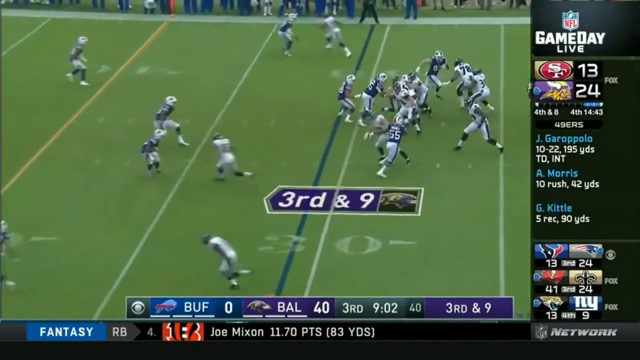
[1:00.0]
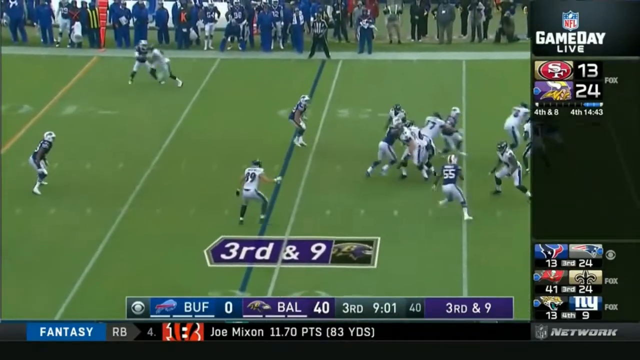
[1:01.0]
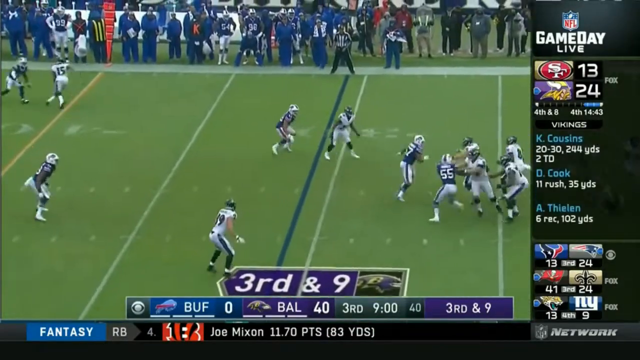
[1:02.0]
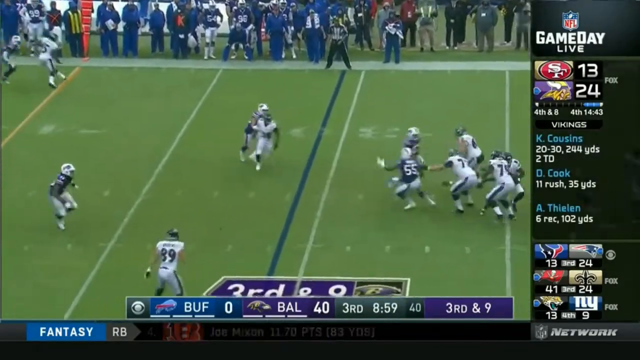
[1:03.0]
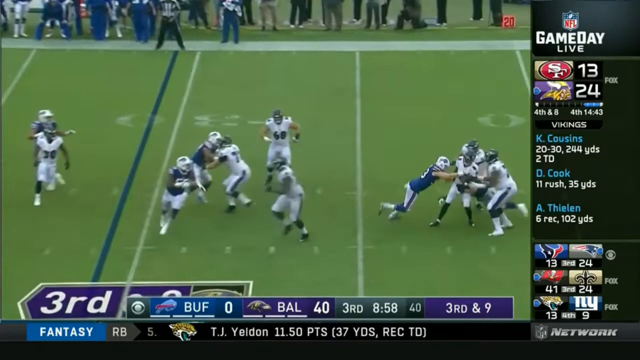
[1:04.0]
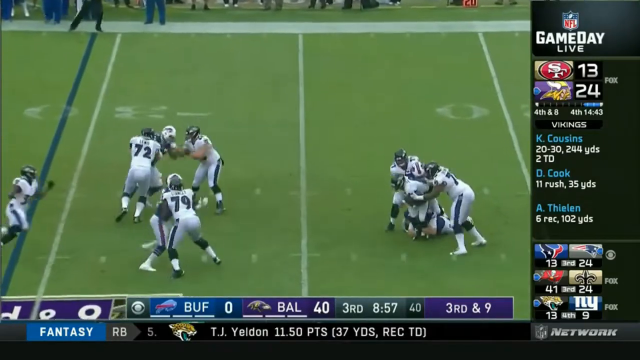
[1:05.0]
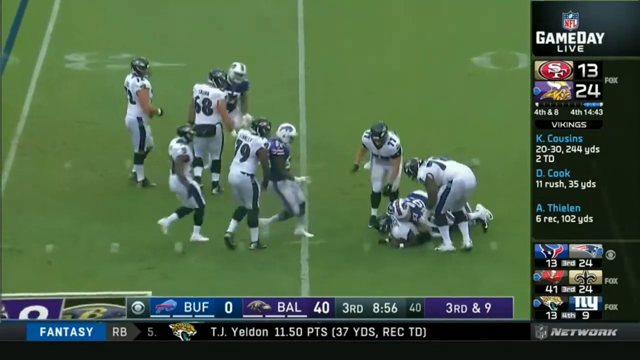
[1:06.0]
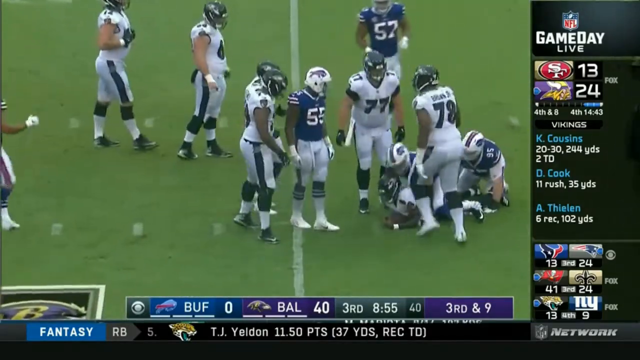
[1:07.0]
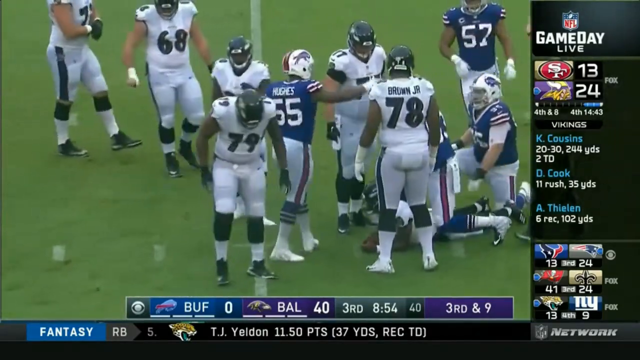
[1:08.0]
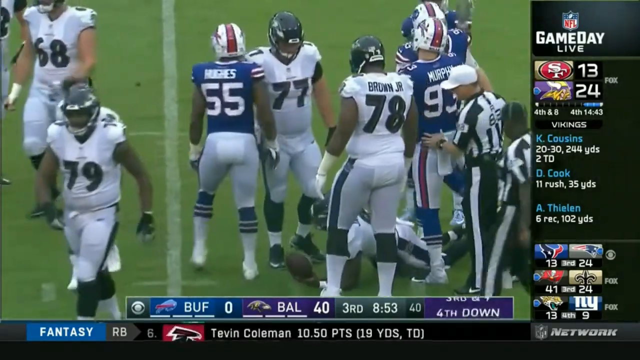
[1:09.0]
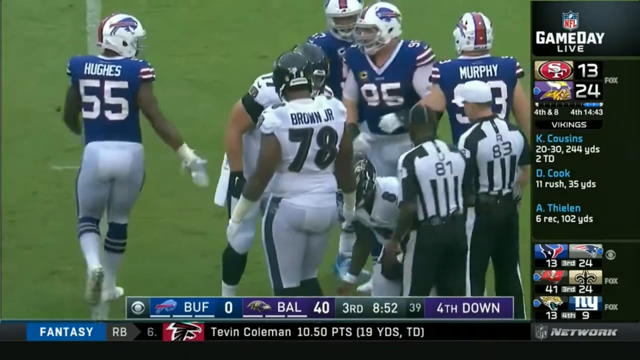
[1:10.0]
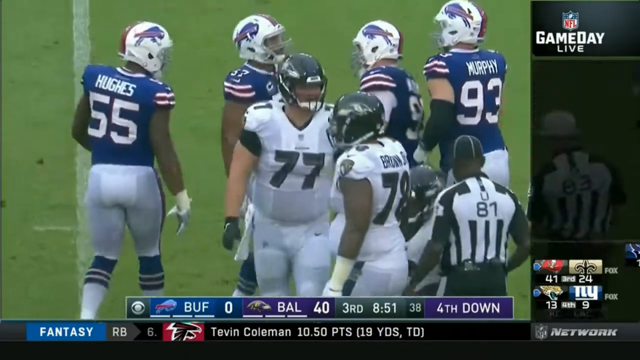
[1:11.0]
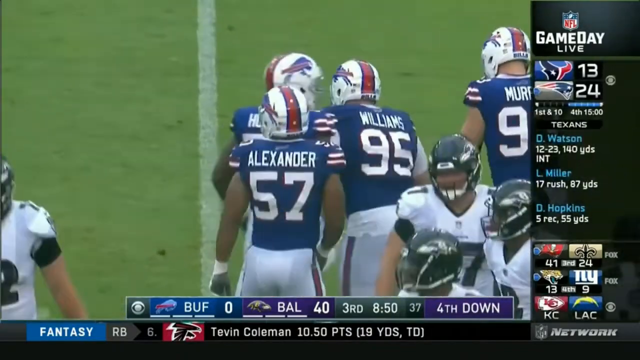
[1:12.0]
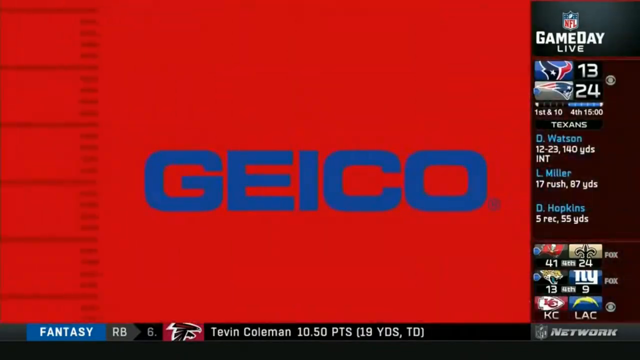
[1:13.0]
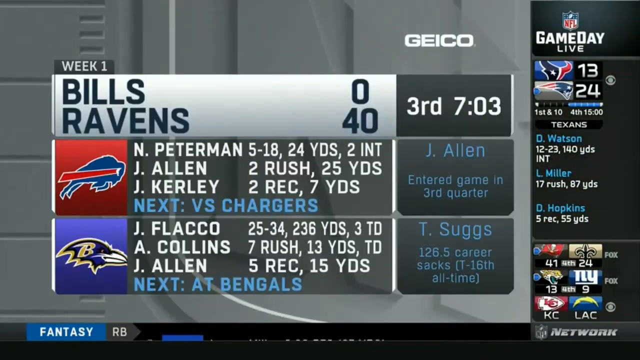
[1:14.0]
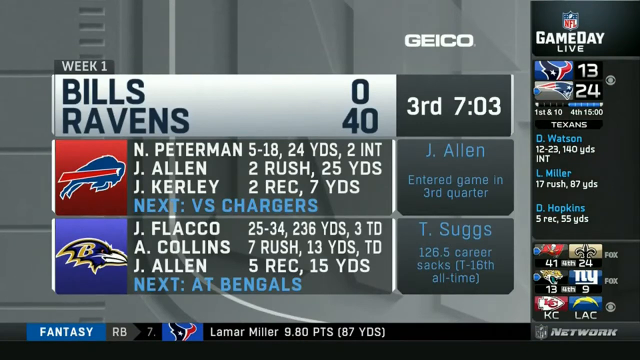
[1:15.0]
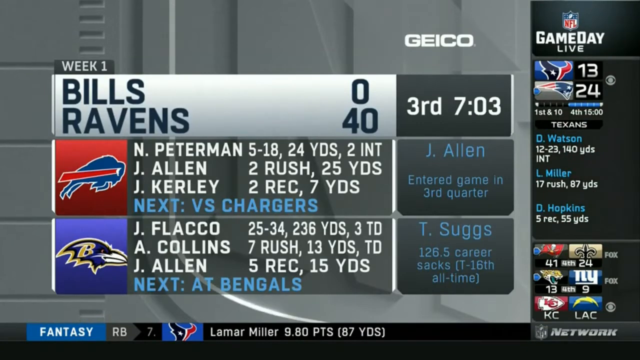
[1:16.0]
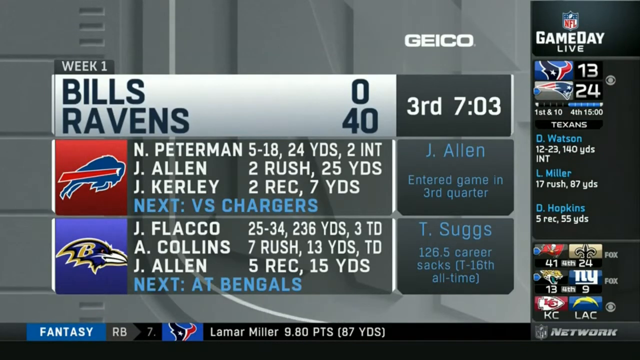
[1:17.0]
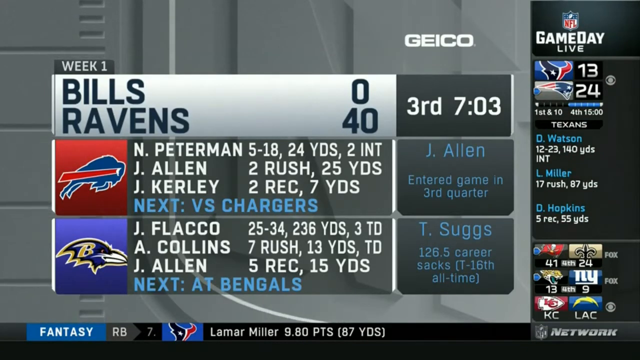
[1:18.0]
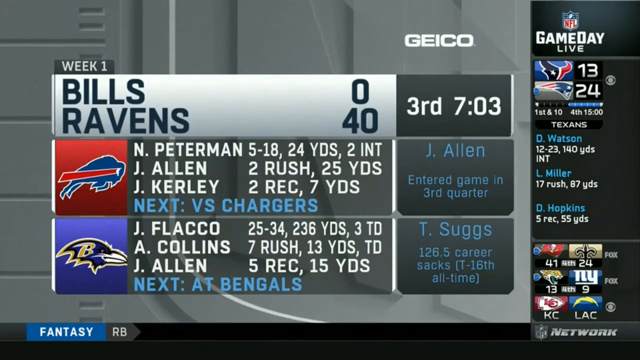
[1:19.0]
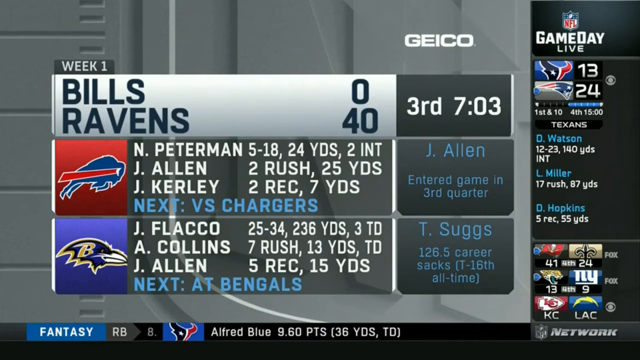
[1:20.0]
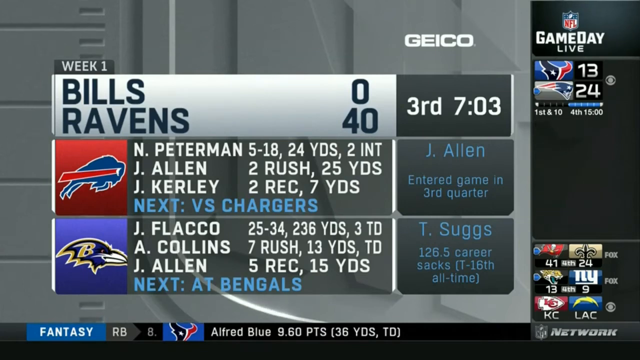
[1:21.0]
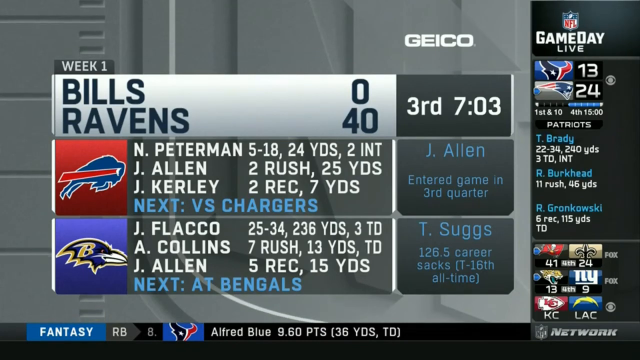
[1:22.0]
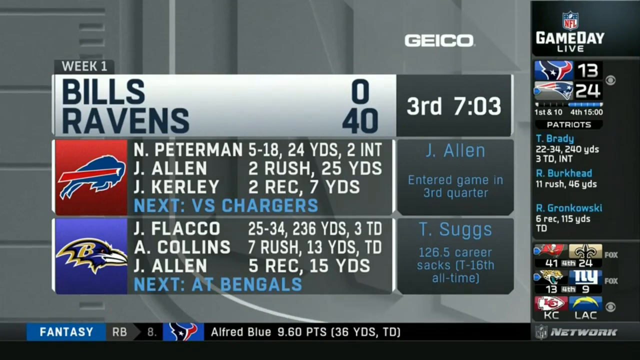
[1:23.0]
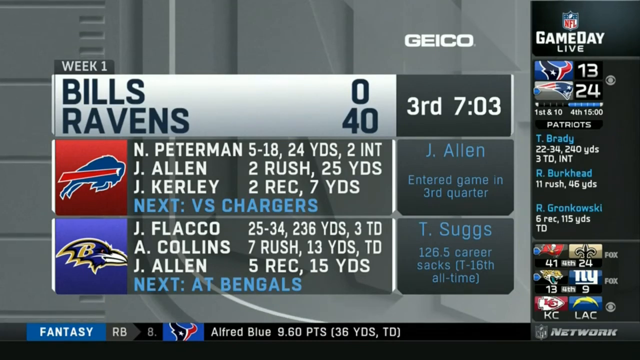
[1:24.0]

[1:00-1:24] The camera zooms out, and it looks like Baltimore is running the play with Jackson trying to run it back and through, but he looks like he just runs backwards and gets nowhere as Buffalo players push him down. He gets up as a couple of Buffalo players walk away from the knockdown. The video cuts to a transition in which a red screen slides in from the right with "GEICO" written in all-capital blue text. It then slides out, forming a little X, and stats appear for "week 1, Bills vs. Ravens," in the third quarter with seven minutes and three seconds left. For the Buffalo Bills: Ann Peterman, 5 of 18, 24 yards, two interceptions; Jay Allen, two rushes, 25 yards; Jake Curley, two receptions, seven yards; and next they play the Dodgers. To the right, a specific-player panel says "Jay Allen entered the game in third quarter." For the Ravens: Jay Flacco, 25-34, 236 yards, three touchdowns; A Colins, seven rushes, 13 yards, a touchdown; Jay Allen, five receptions, 15 yards; and "next at Bengals." A panel then shows Tee Suggs of the Ravens with 126.5 career sacks, tied 16th all time.